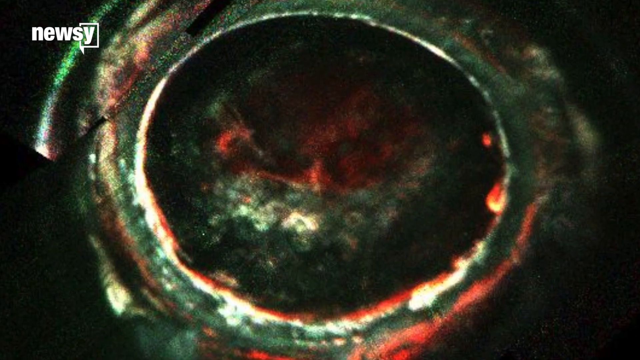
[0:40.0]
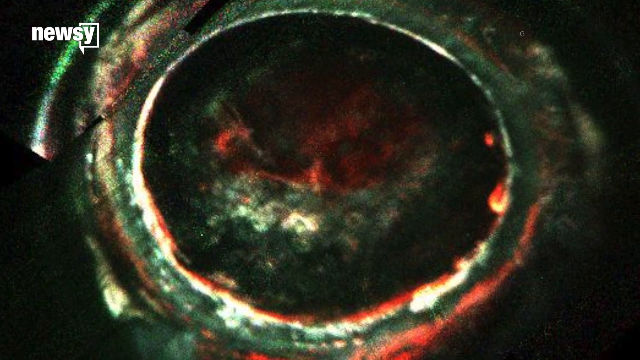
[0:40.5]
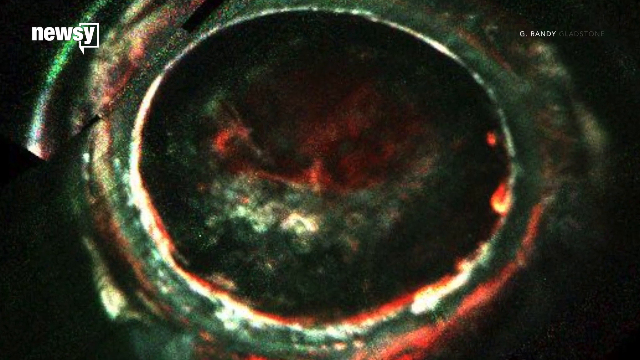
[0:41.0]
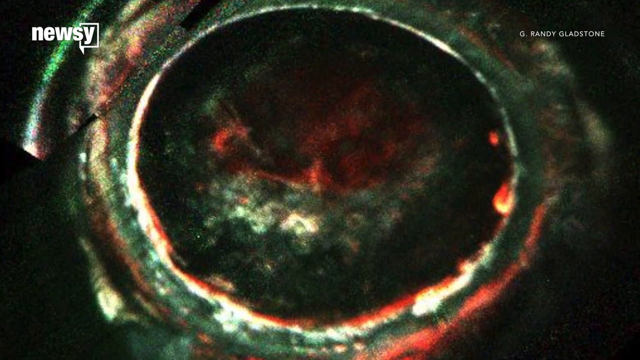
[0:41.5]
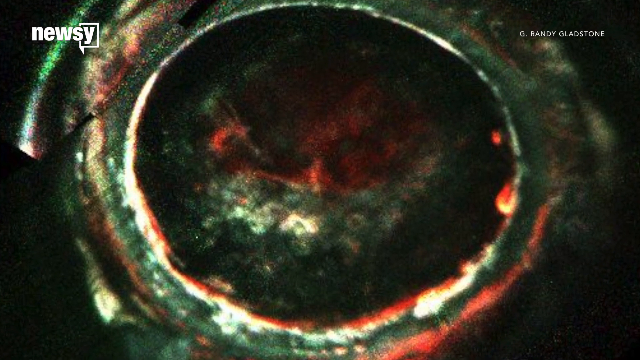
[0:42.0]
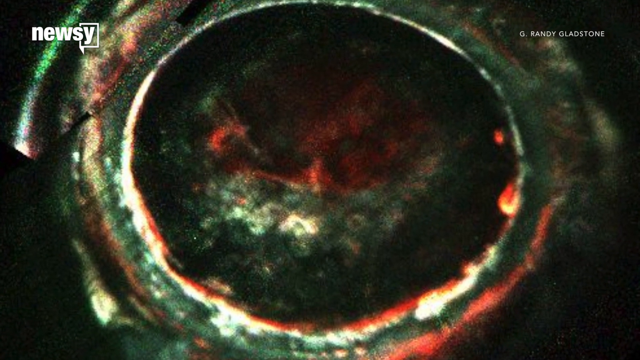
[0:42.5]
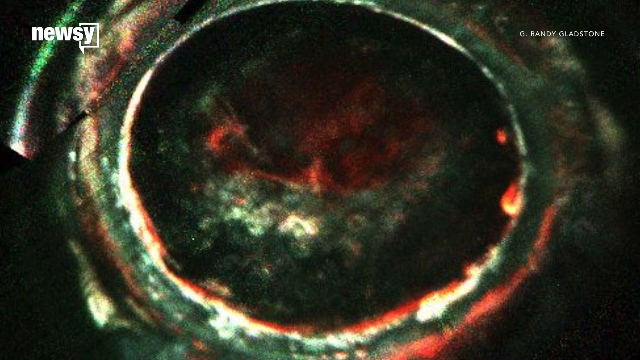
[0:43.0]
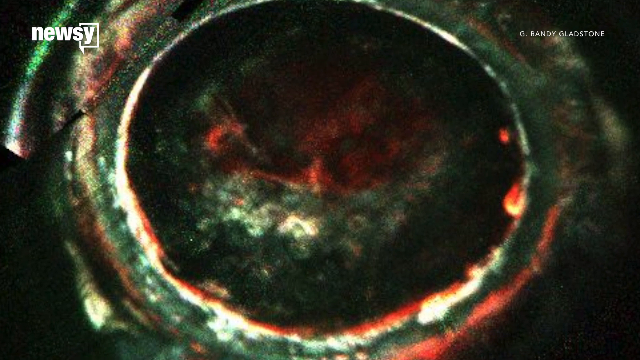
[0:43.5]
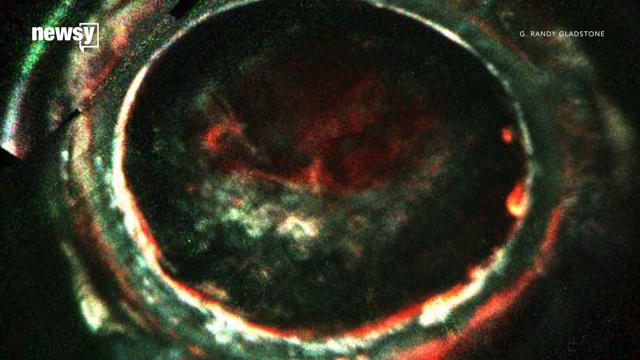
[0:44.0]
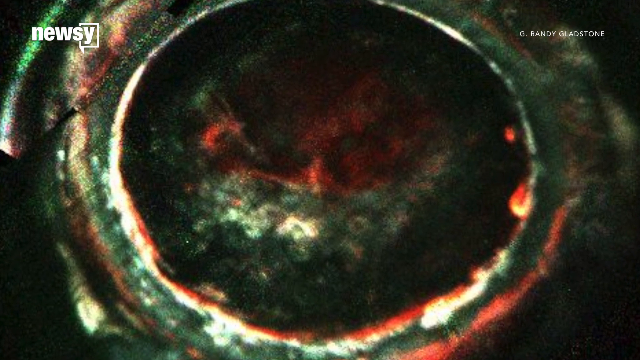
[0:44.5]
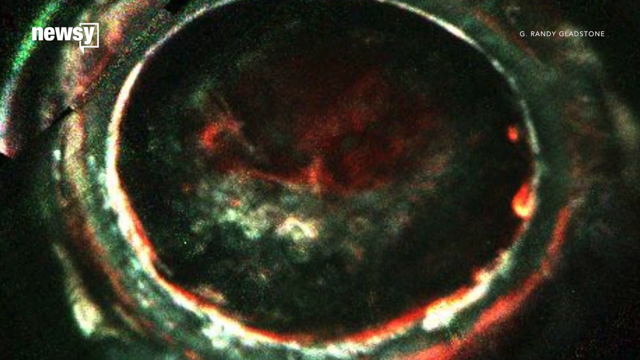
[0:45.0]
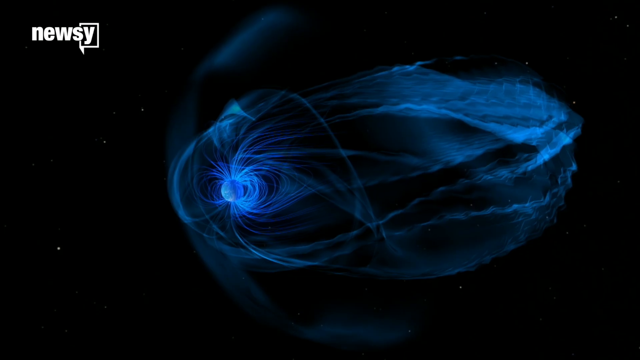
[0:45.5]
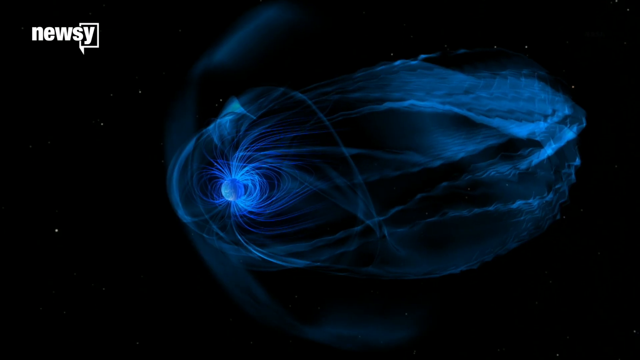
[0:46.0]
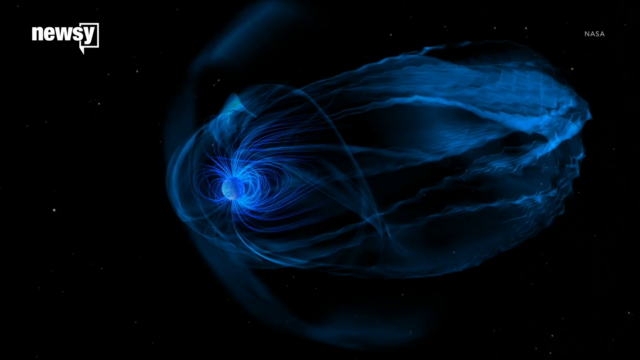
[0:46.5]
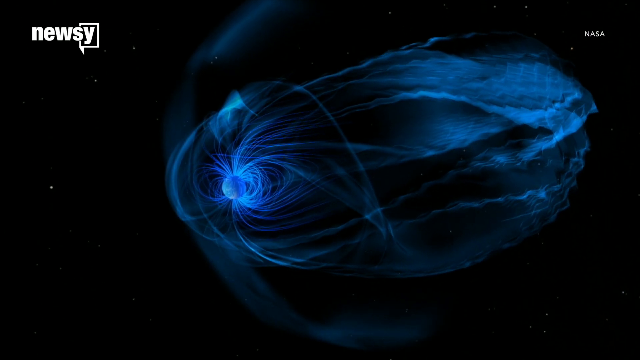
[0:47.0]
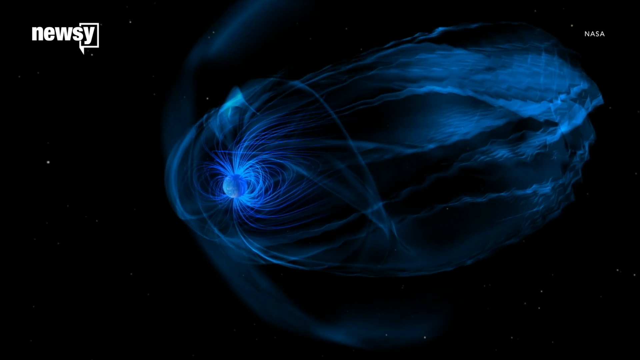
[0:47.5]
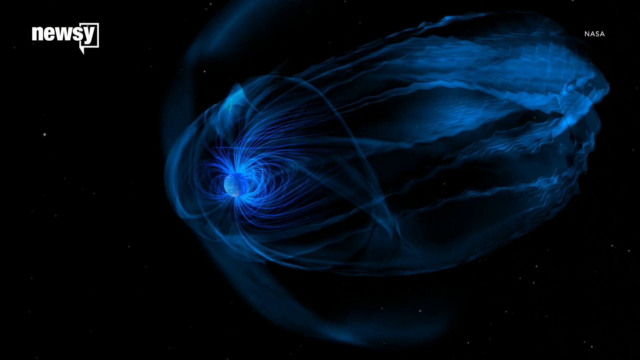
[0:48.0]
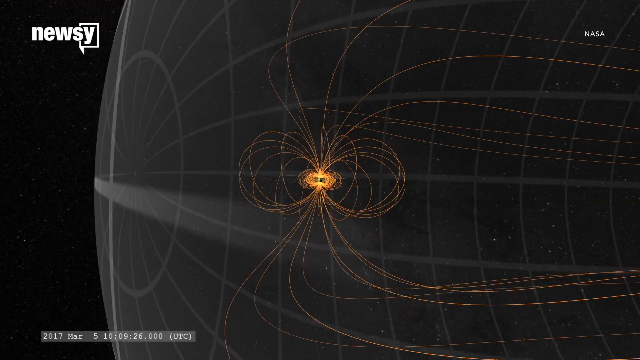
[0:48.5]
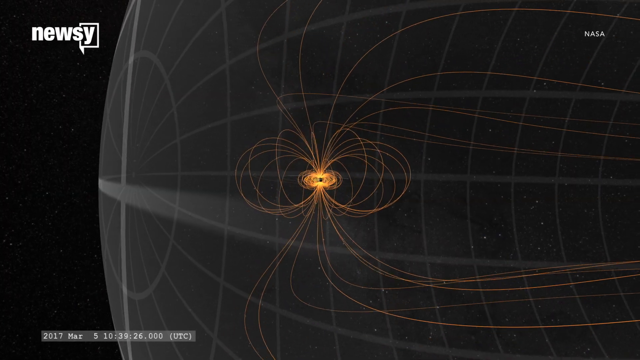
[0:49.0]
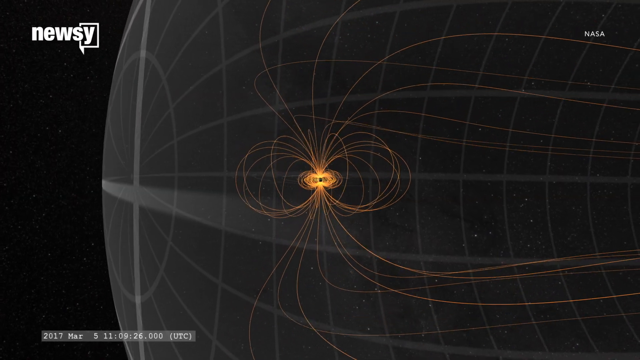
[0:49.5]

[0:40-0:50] Part of the video shows description text. The scene is unclear, and it is uncertain whether what is shown is the planet or something else.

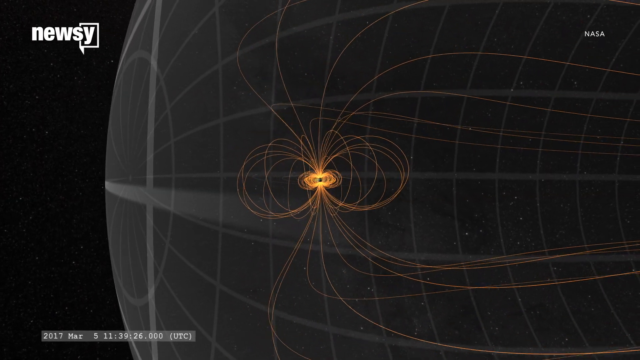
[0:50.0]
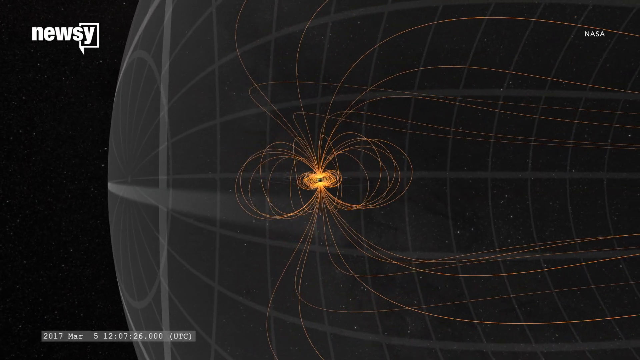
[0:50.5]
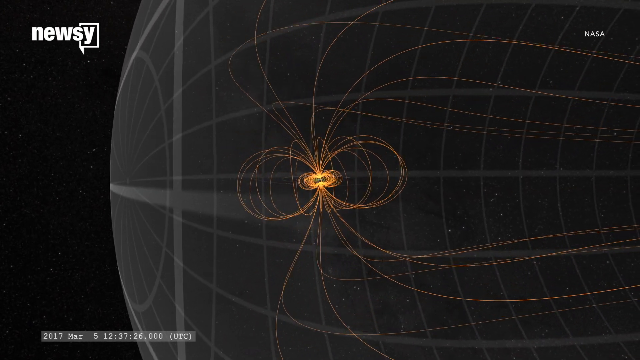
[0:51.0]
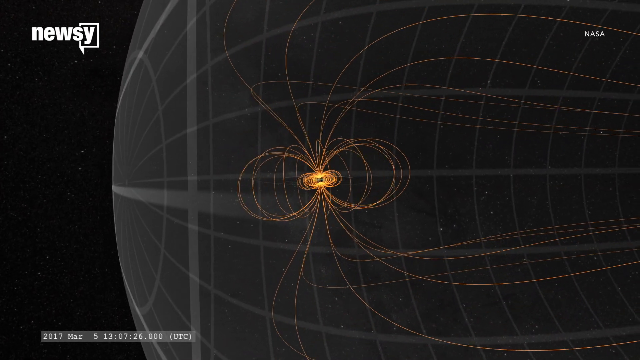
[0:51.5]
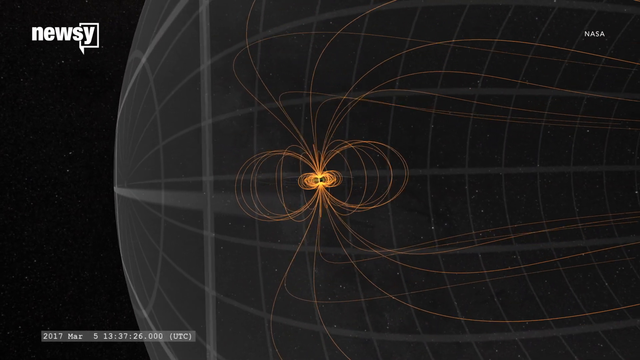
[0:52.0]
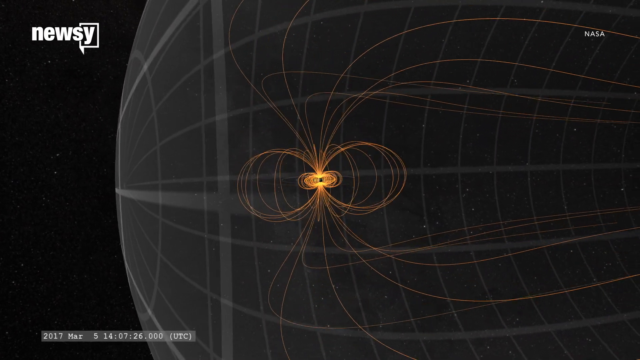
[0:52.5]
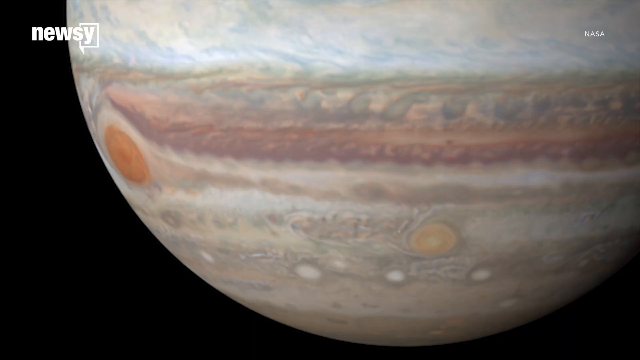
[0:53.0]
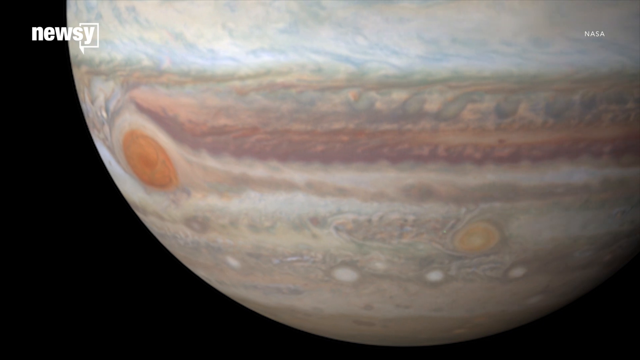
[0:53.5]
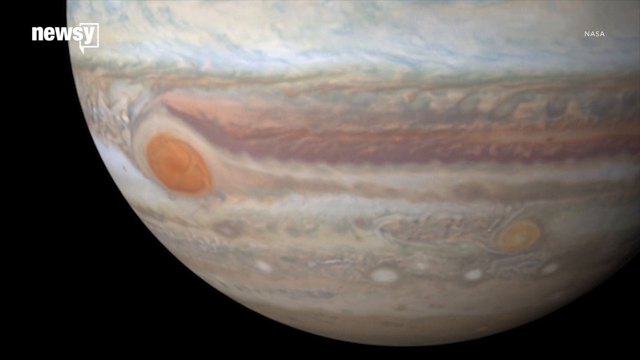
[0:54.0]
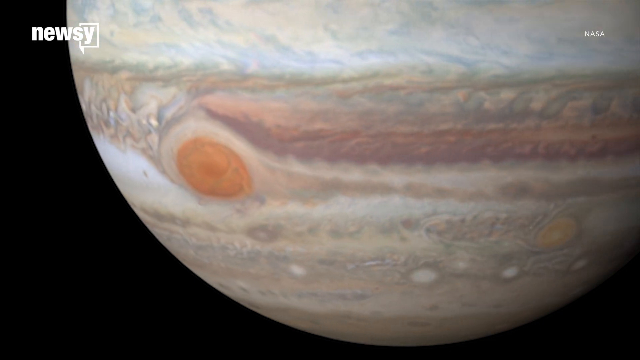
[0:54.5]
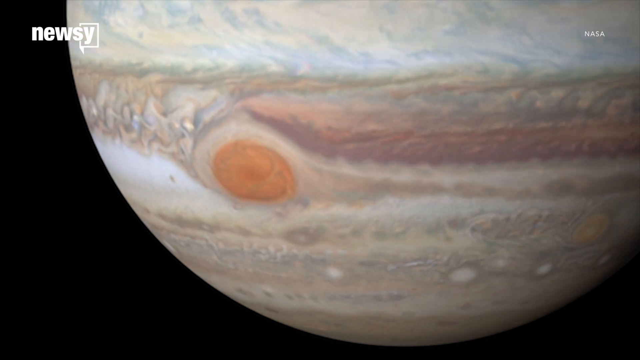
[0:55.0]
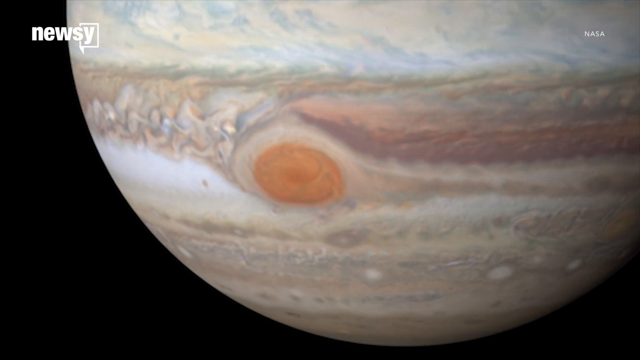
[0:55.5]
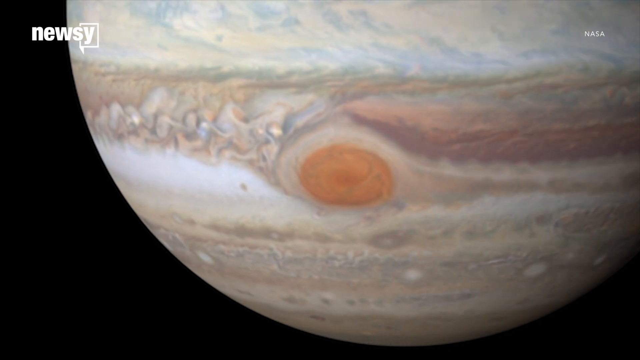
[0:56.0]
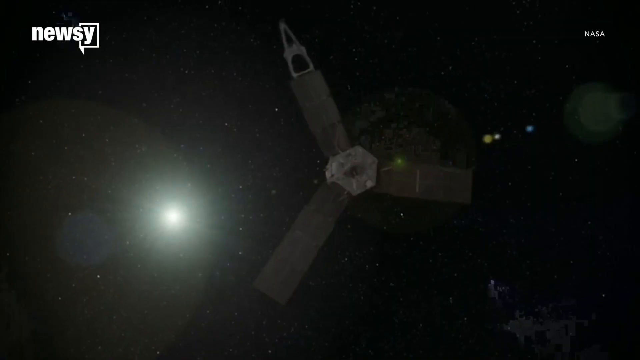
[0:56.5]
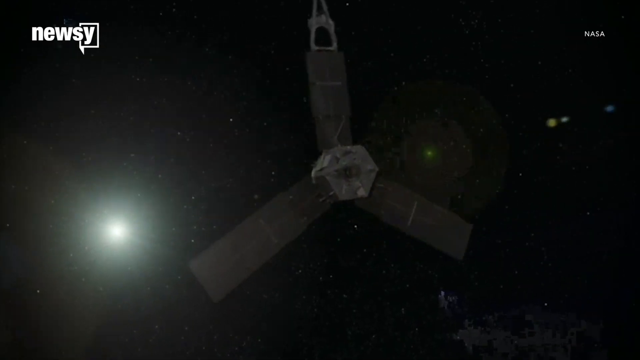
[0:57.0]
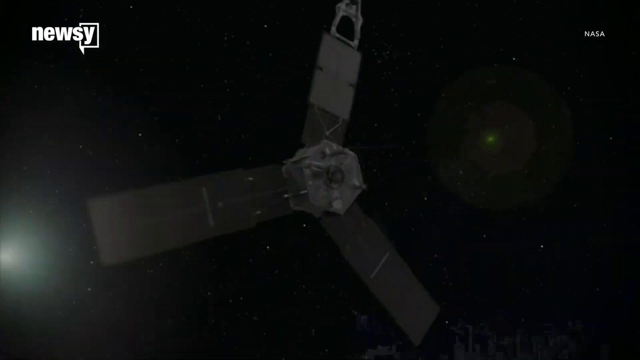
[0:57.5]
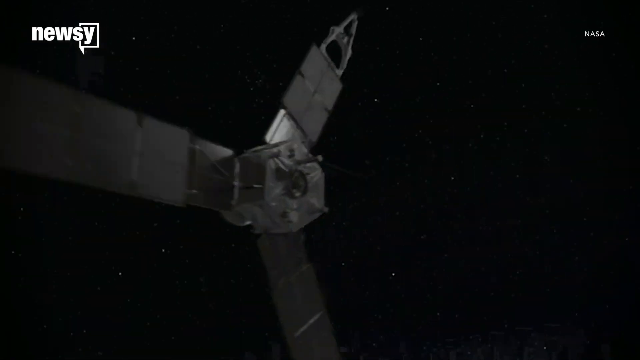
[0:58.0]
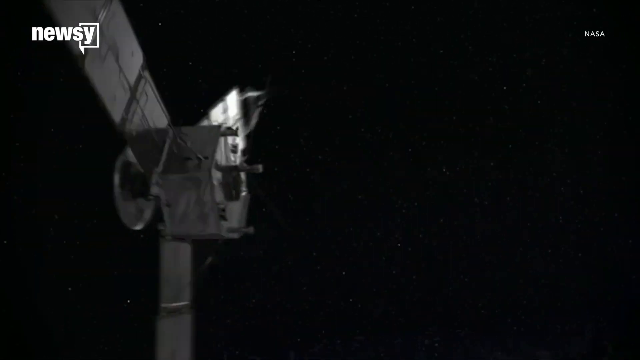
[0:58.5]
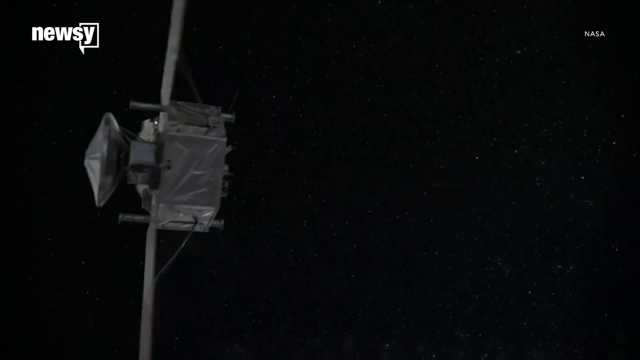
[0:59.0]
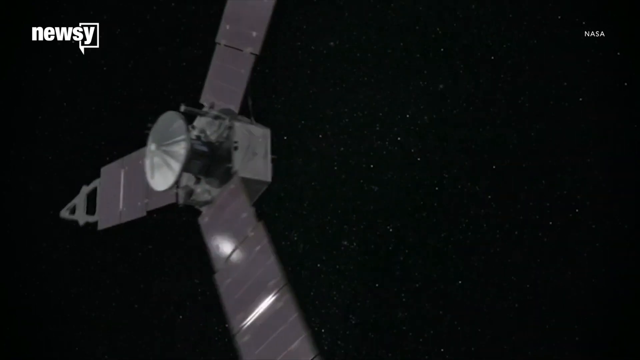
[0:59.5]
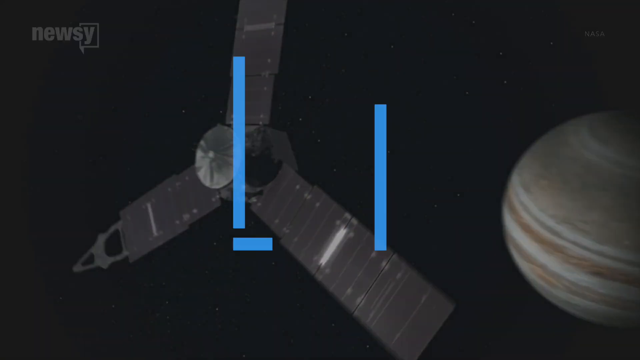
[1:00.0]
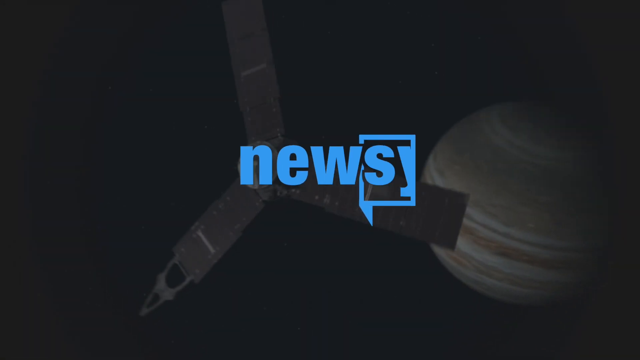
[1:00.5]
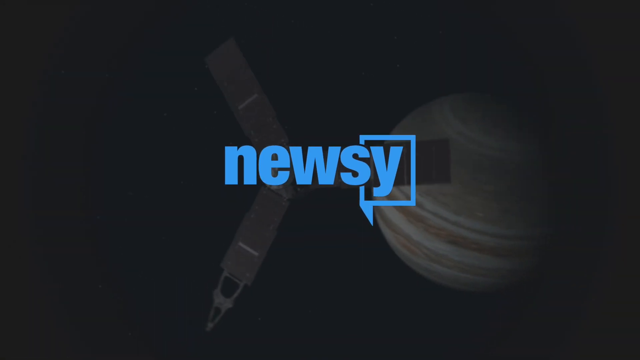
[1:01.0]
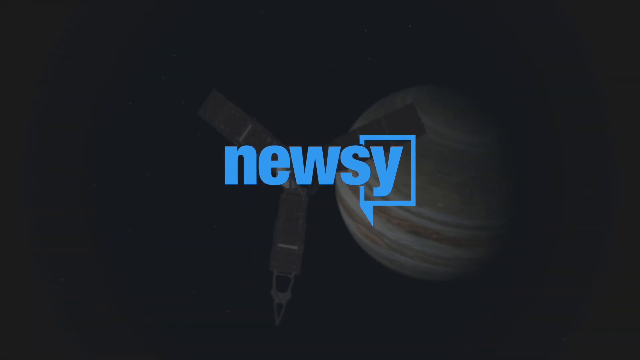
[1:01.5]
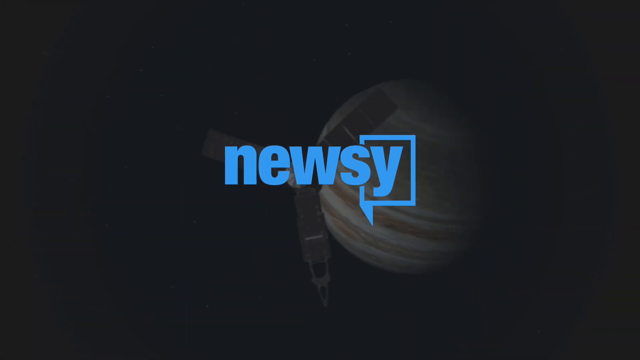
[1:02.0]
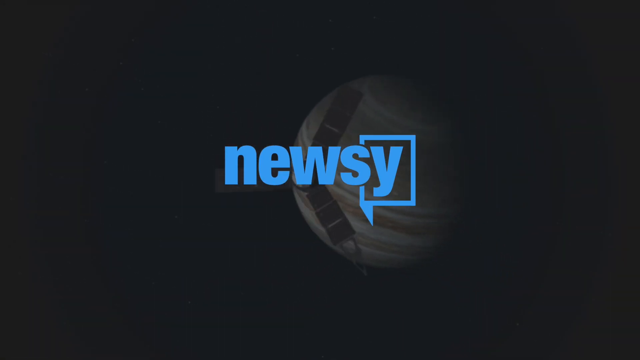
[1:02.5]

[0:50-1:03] What might be a colorful planet is shown, along with a space shuttle that appears to be observing what is happening on the planet.